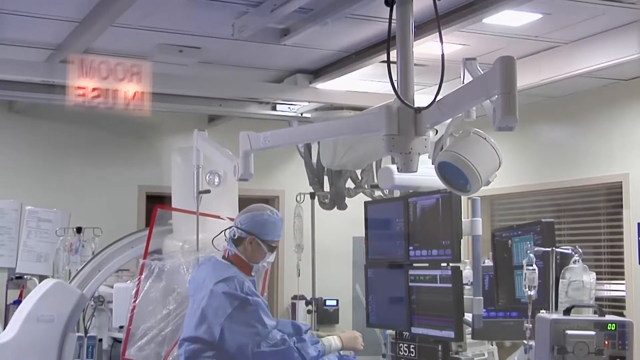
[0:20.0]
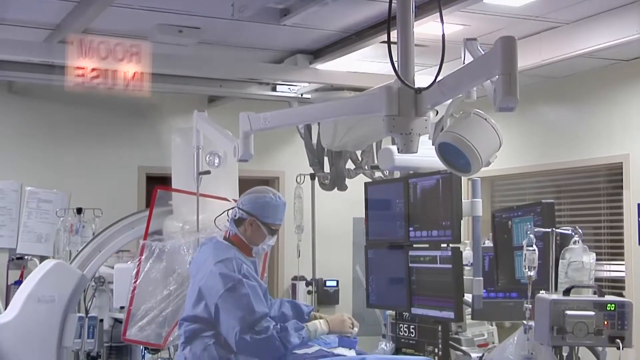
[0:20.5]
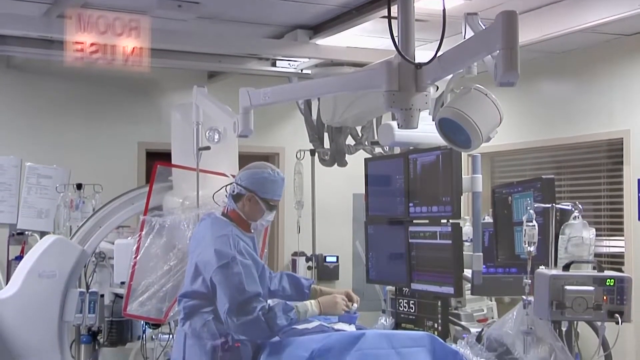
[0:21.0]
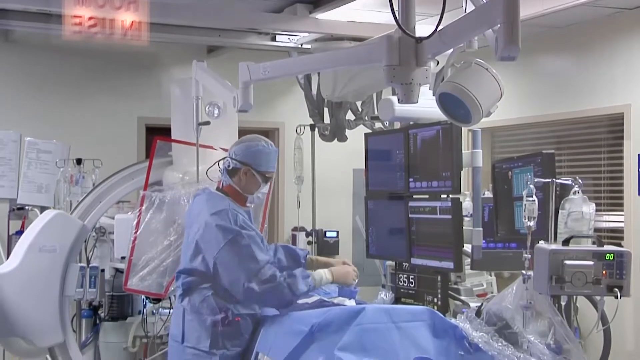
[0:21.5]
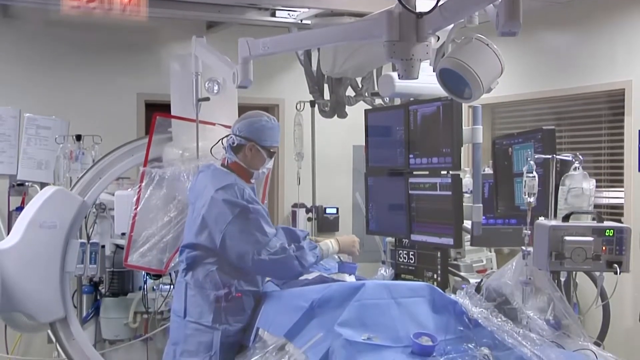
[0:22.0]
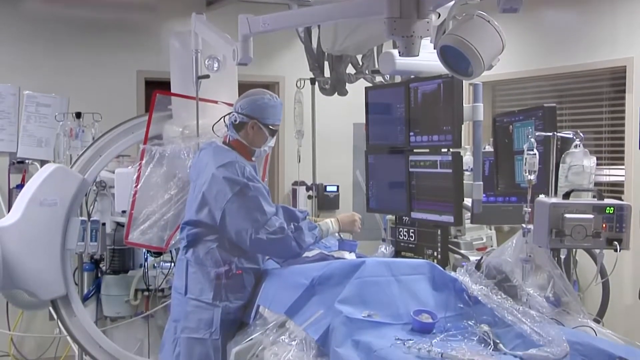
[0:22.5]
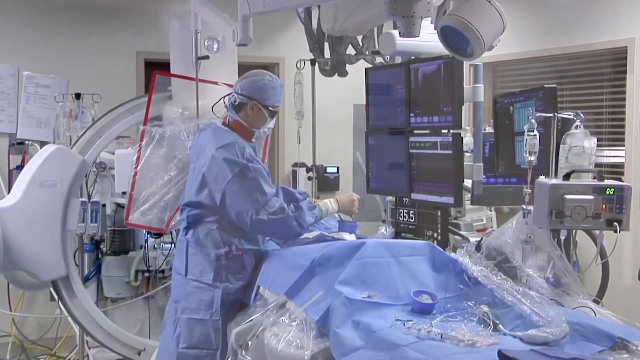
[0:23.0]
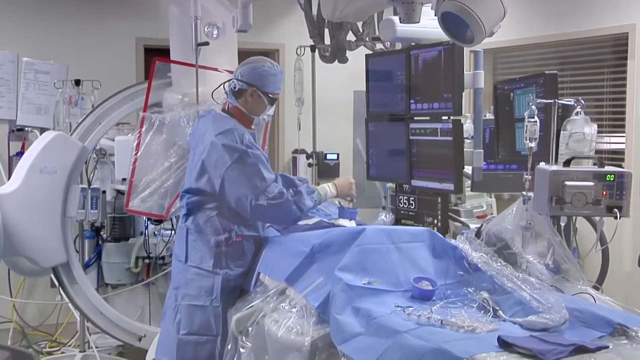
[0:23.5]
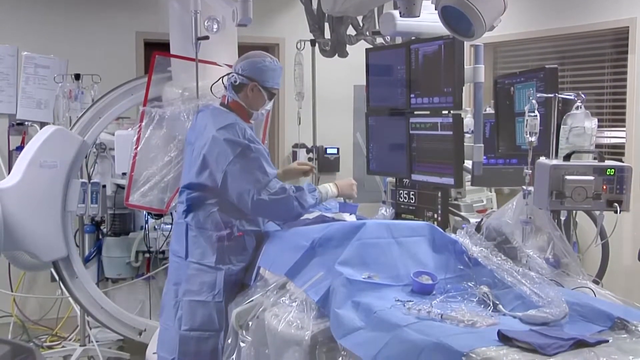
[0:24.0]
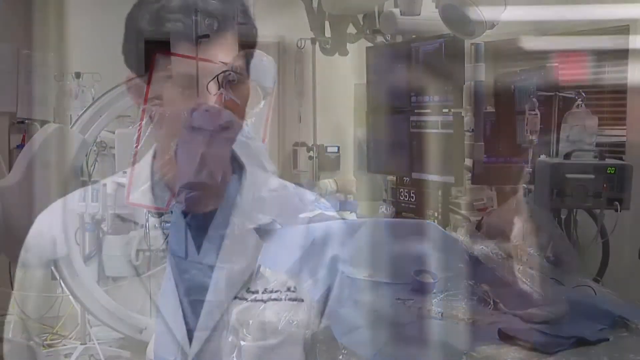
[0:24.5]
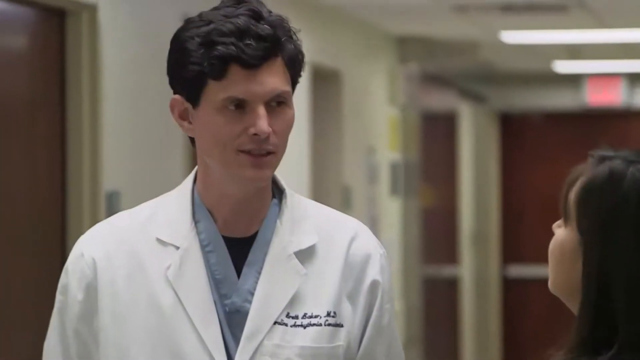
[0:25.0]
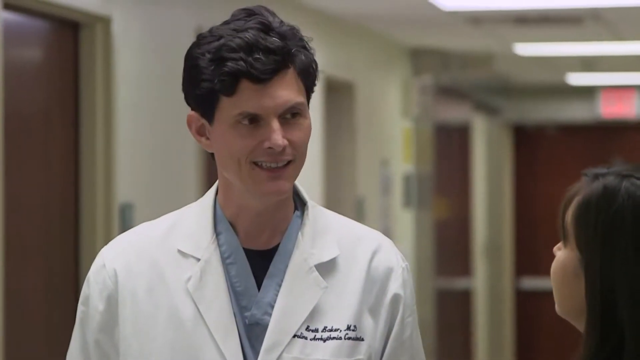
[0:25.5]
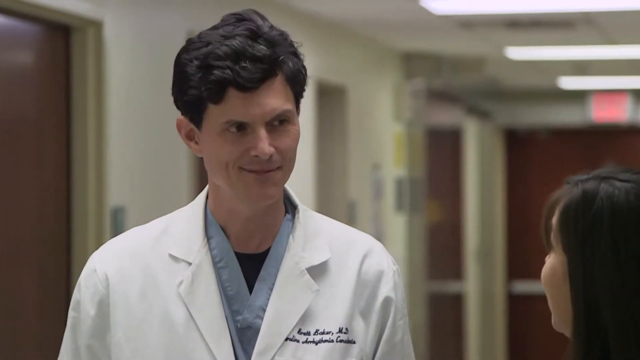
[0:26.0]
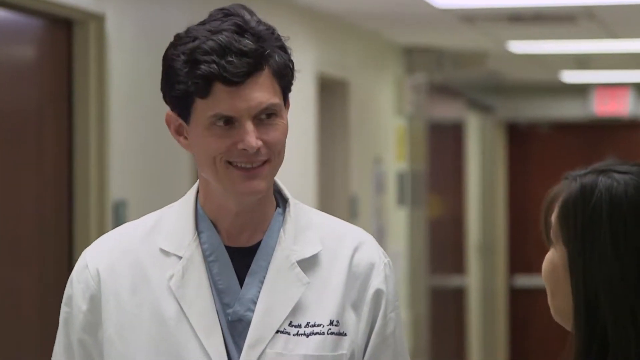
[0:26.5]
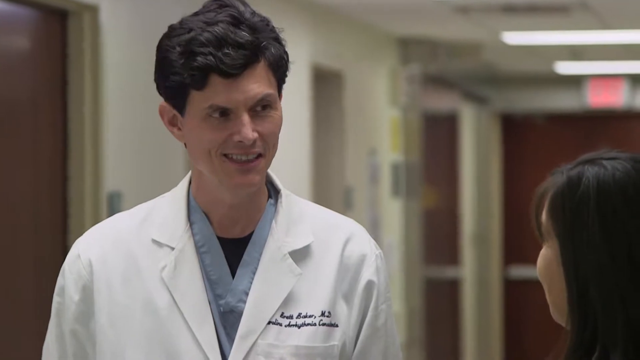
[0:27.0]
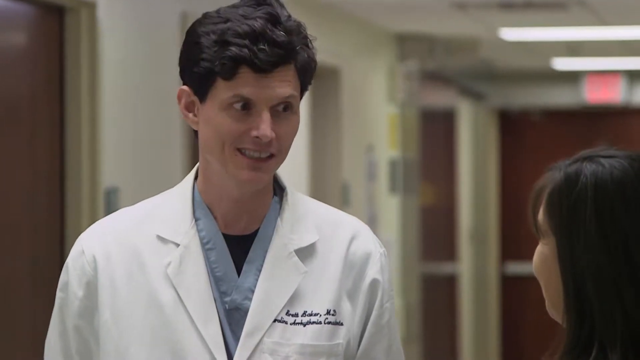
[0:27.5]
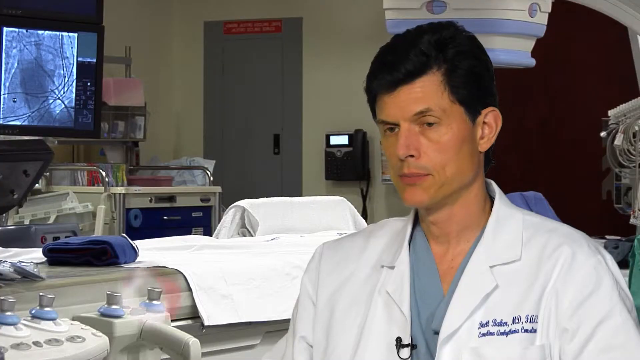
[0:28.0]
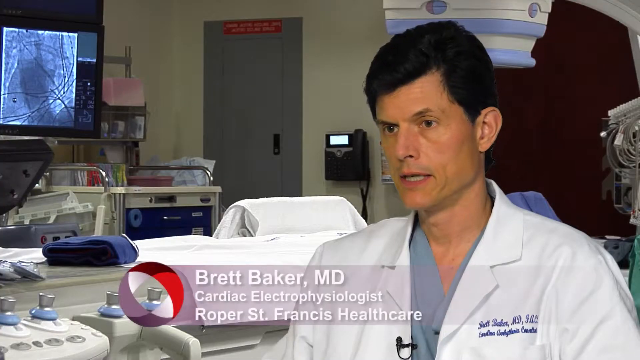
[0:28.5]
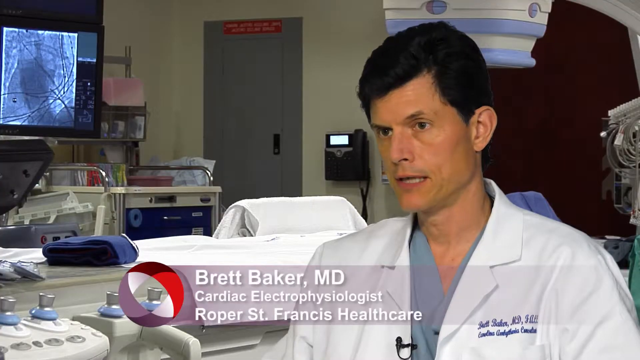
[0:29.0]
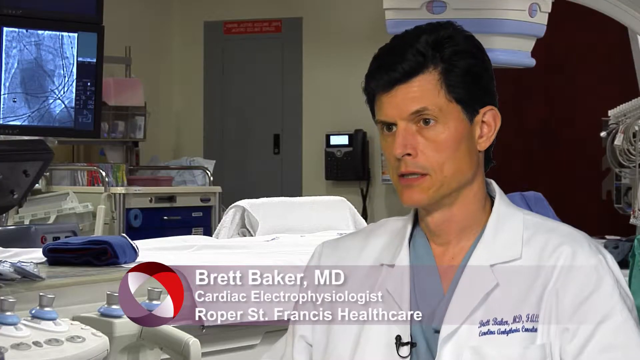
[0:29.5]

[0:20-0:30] The camera pans very slowly from the top down to doctors, identifiable by their uniforms and the environment, who are performing a procedure. Many hands-on technological instruments are being used, and the patient is covered with a hospital sheet. Next, what appears to be a male doctor talks to either a patient or a nurse; he wears a white coat showing his name and his role at the hospital. Brett Barker, a cardiology doctor, then talks directly toward the camera in a kind of interview style.